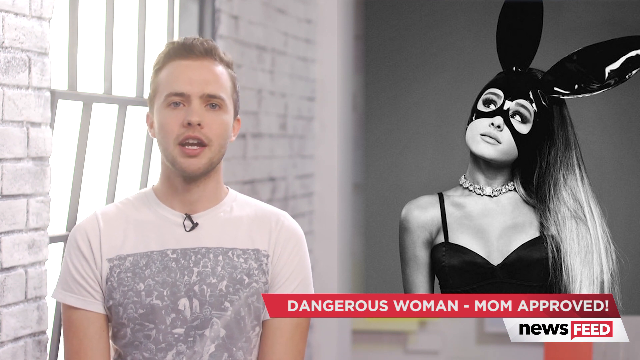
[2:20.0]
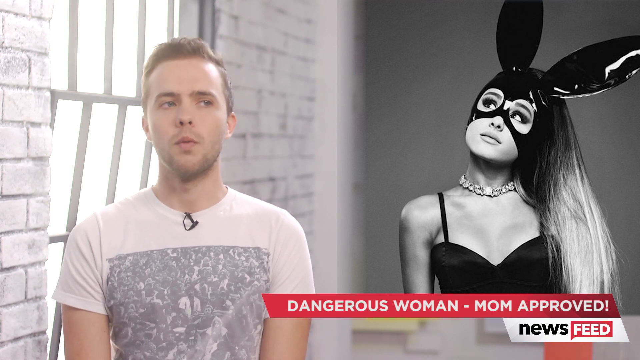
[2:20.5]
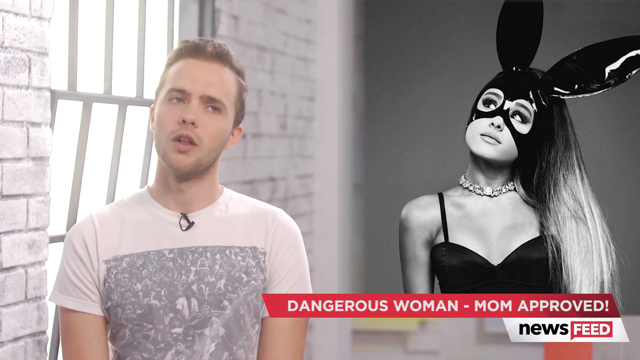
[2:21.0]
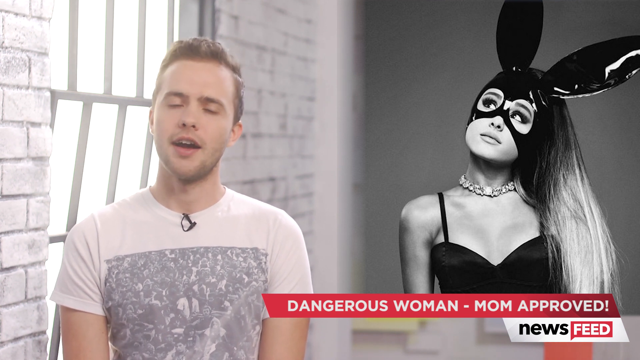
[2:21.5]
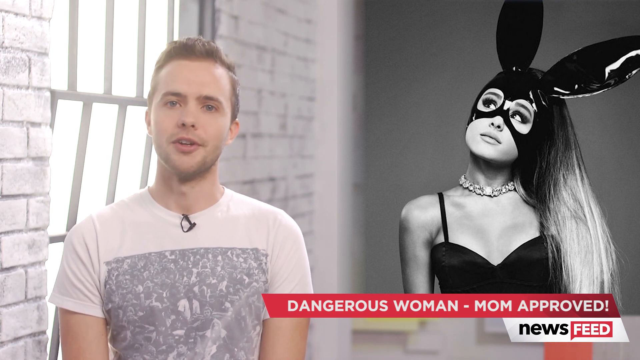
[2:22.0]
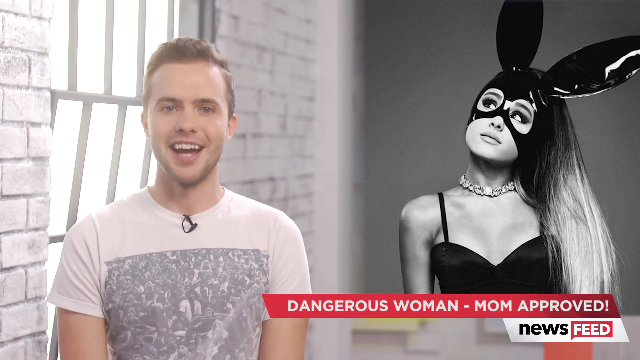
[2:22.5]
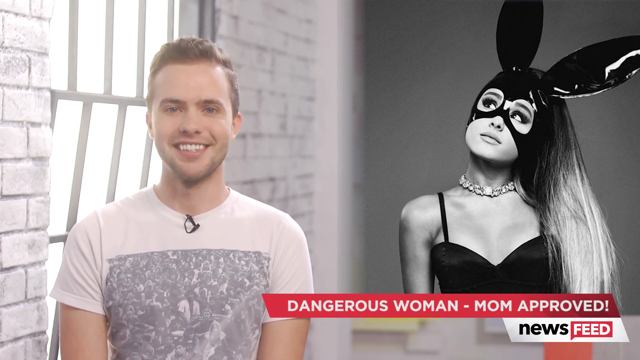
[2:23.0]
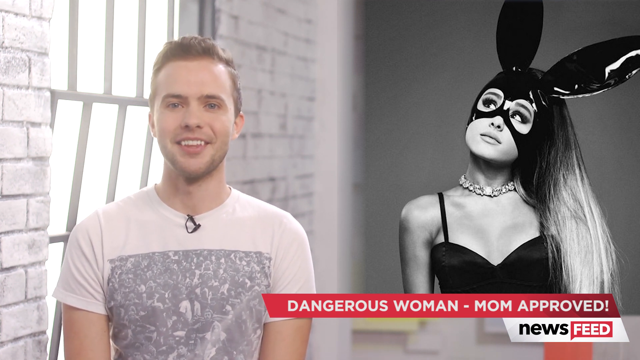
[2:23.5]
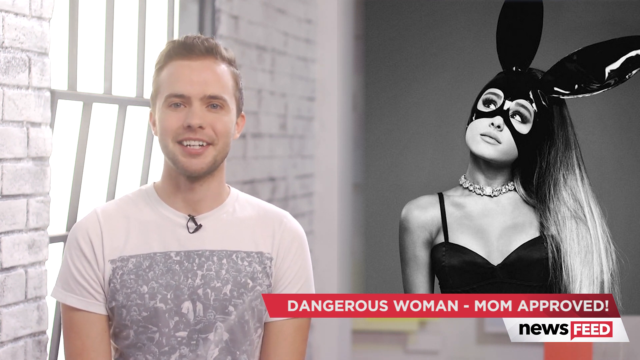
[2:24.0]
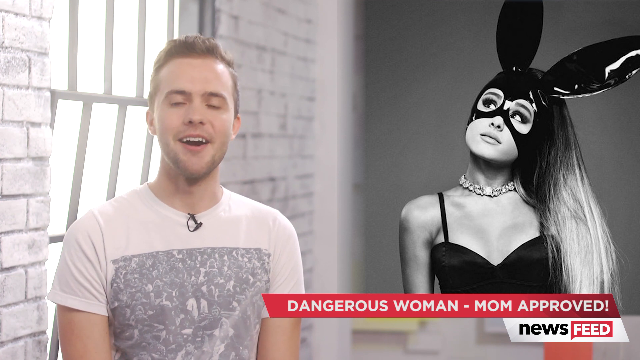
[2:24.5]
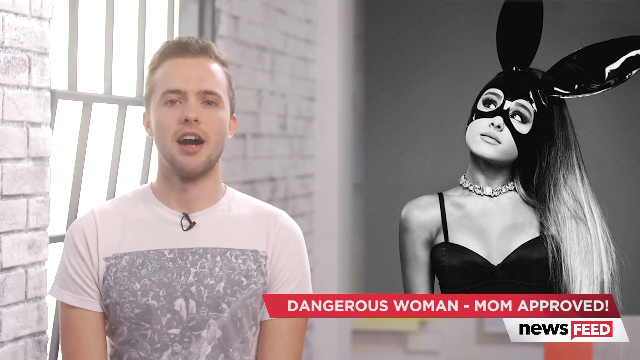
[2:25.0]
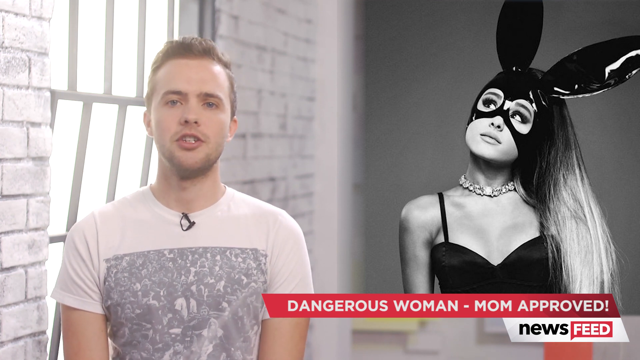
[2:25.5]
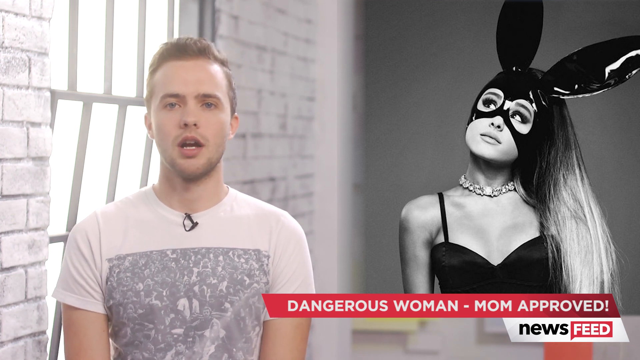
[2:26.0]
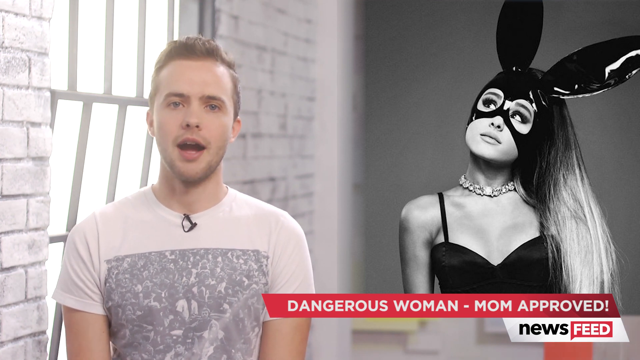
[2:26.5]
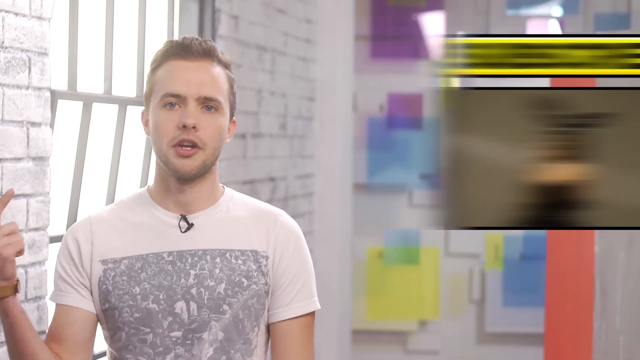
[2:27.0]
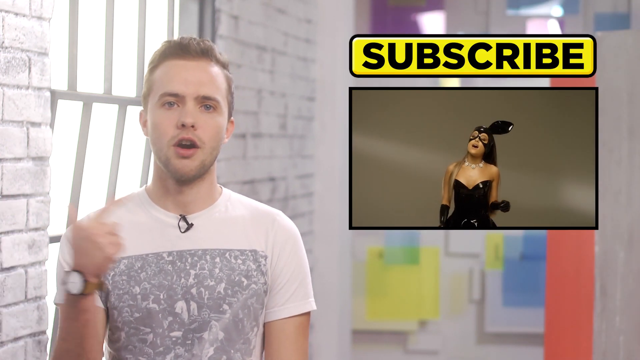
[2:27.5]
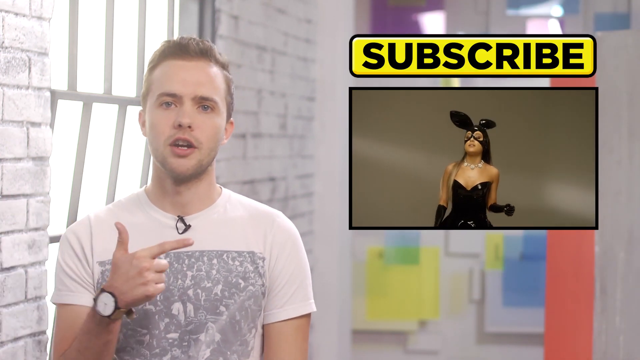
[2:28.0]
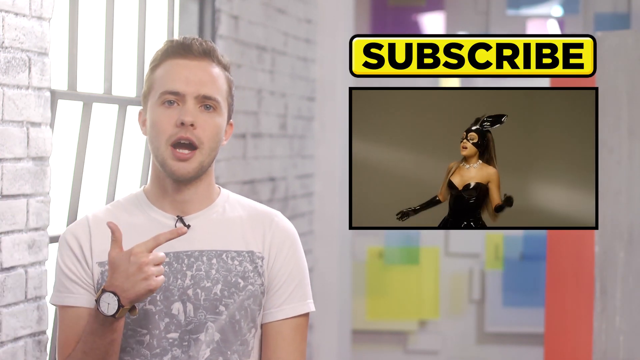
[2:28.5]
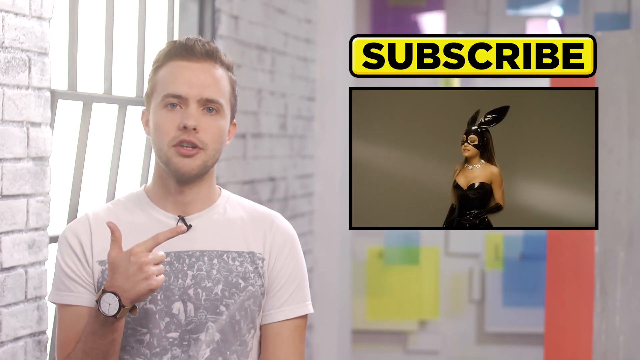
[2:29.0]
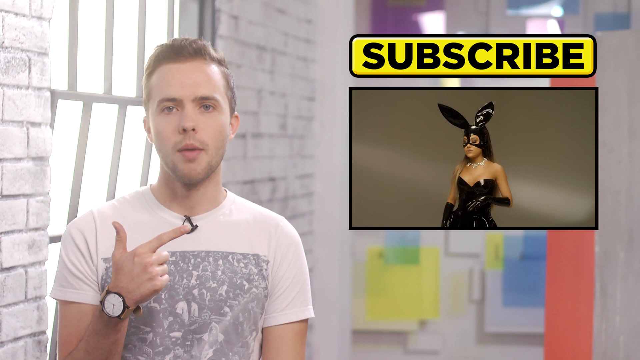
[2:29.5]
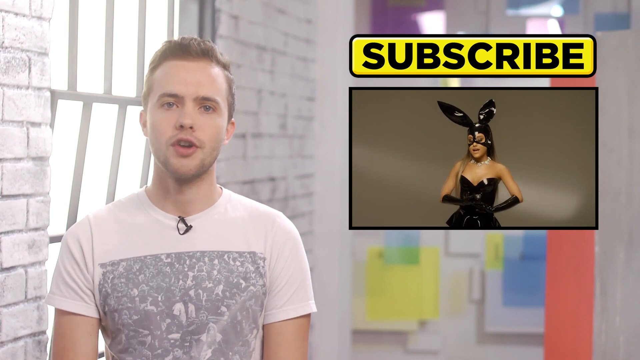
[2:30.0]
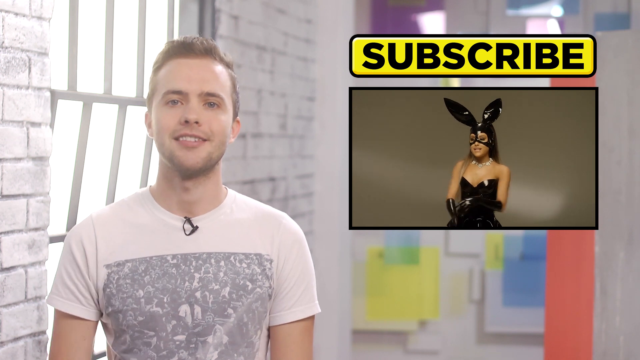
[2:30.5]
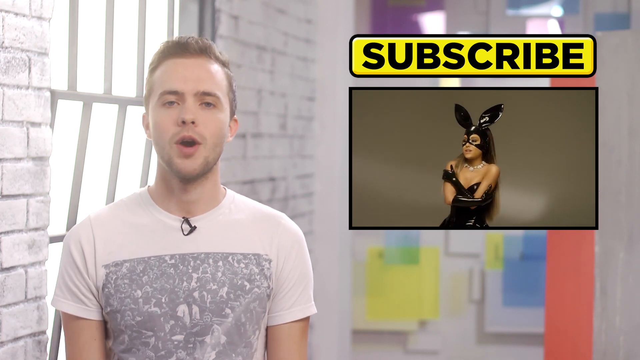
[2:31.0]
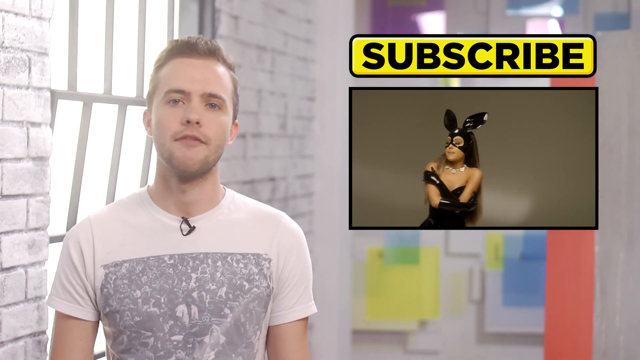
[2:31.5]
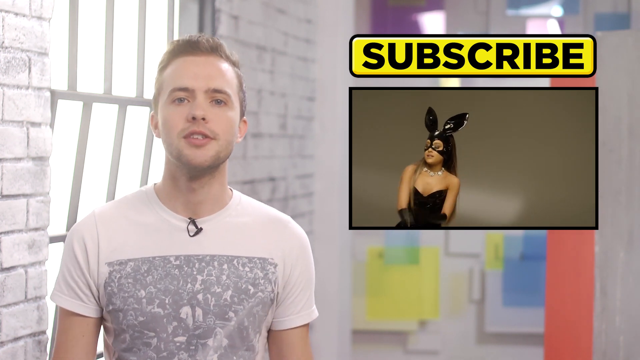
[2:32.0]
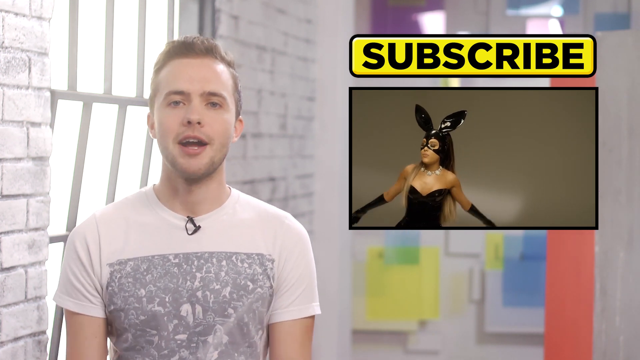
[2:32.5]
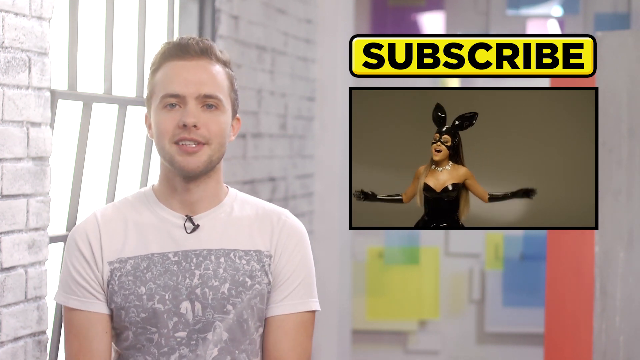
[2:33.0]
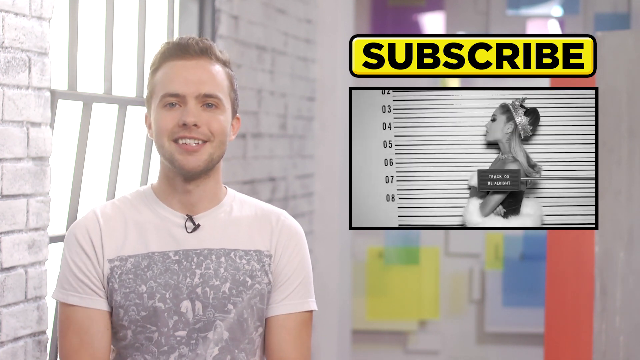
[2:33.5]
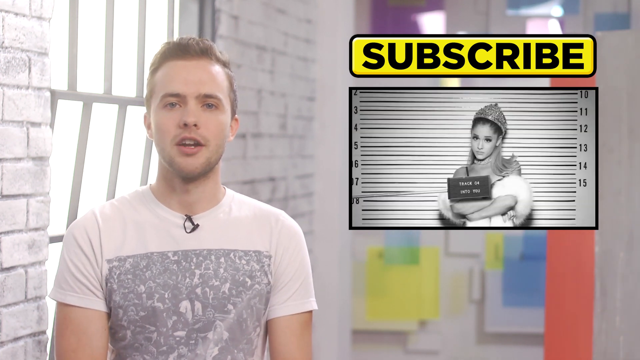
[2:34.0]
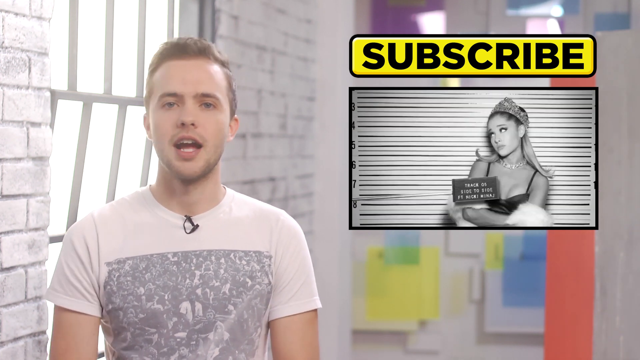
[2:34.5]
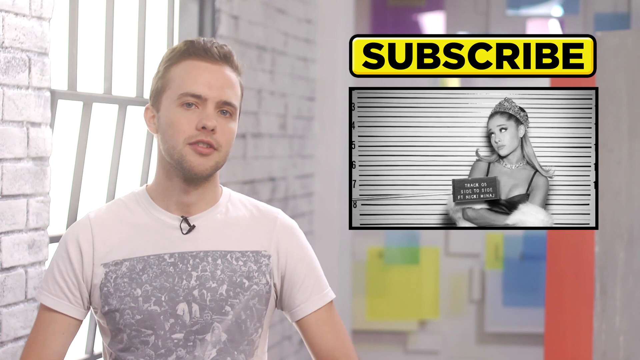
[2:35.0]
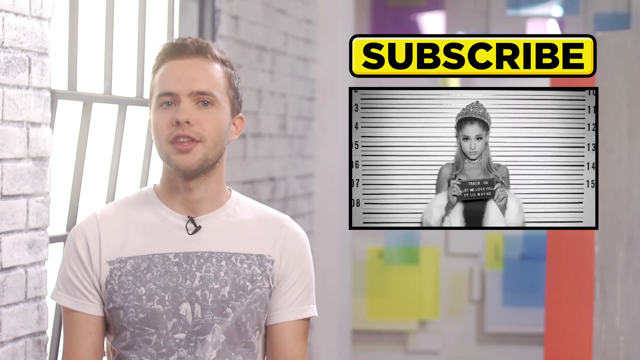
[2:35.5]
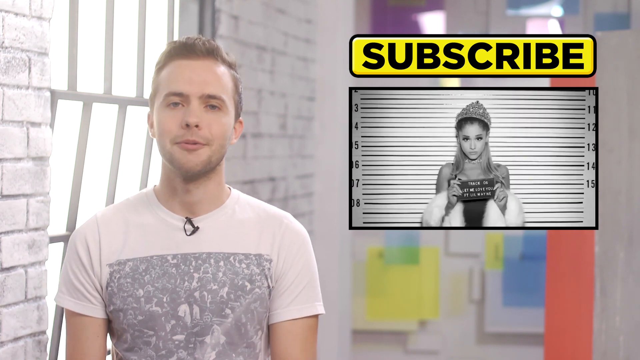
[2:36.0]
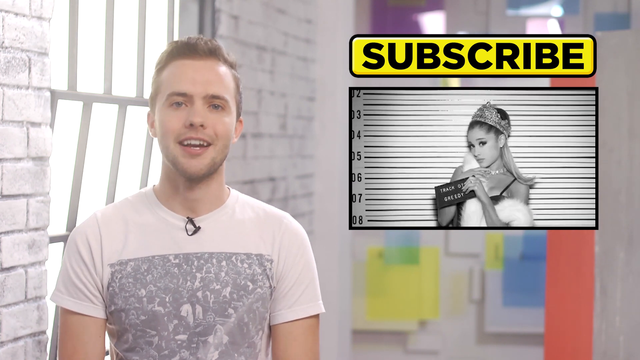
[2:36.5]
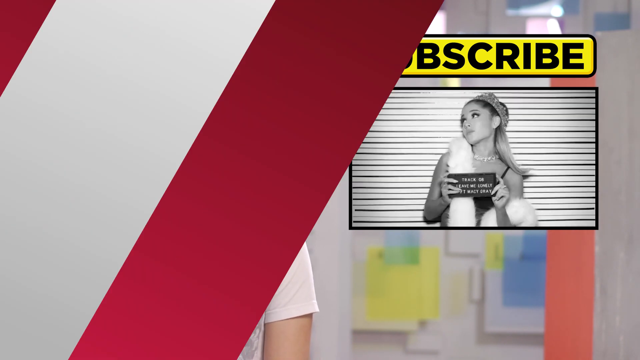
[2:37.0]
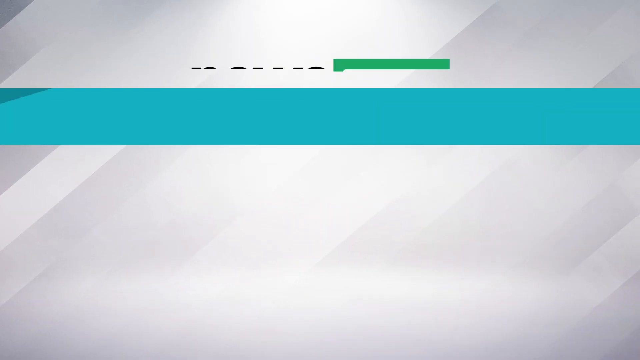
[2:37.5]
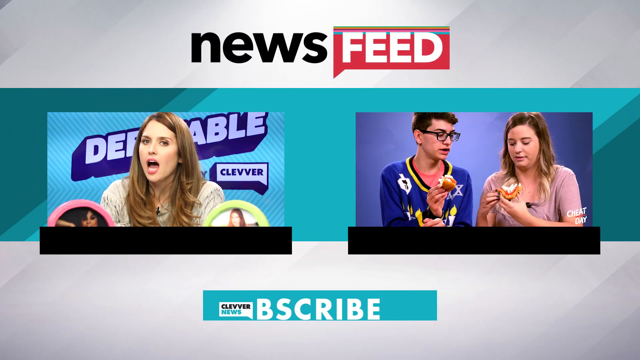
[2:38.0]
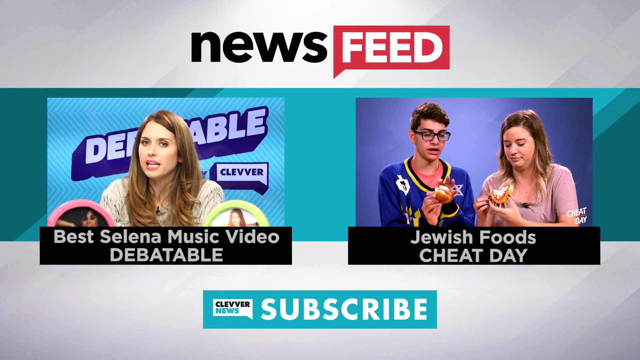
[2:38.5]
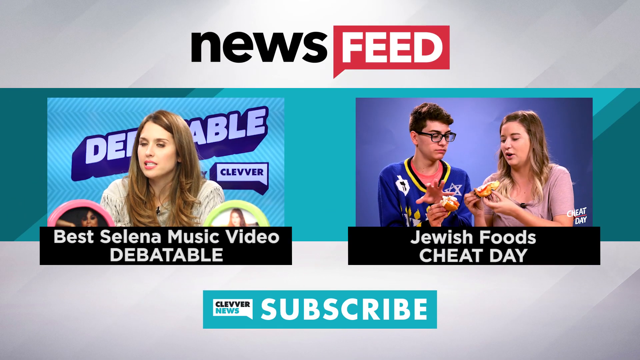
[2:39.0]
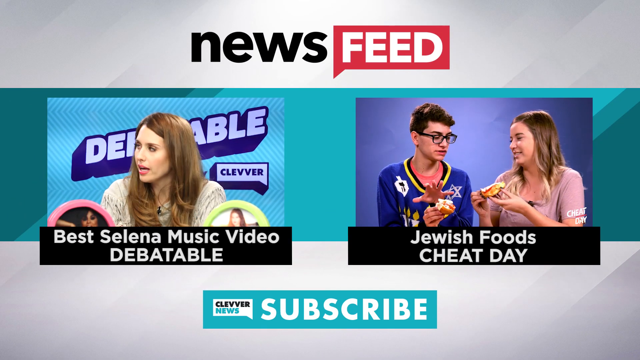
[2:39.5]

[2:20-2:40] A young man reports on a show called News Feed, in a daytime scene inside an apartment. He smiles; he has dark brown hair spiked up in the front, a beard and a light mustache, and a microphone attached to his t-shirt collar. On his right is a large screen showing an image of Ariana Grande. He points the index finger of his right hand toward the screen, and the story shrinks from the large TV into a smaller screen, showing Ariana in a black sexy outfit that looks like shiny leather. Above her, a yellow subscribe button with bold black text pops up. At the end of the video, the News Feed logo shoots off to the right and off the screen.